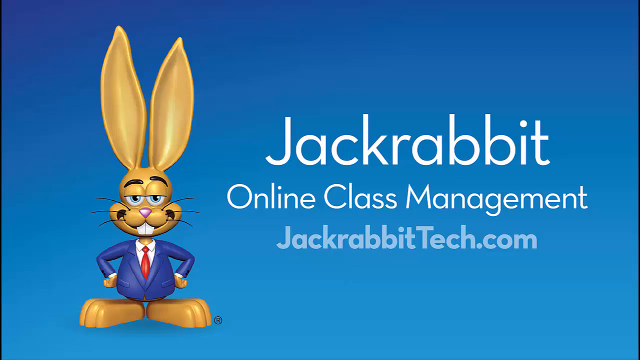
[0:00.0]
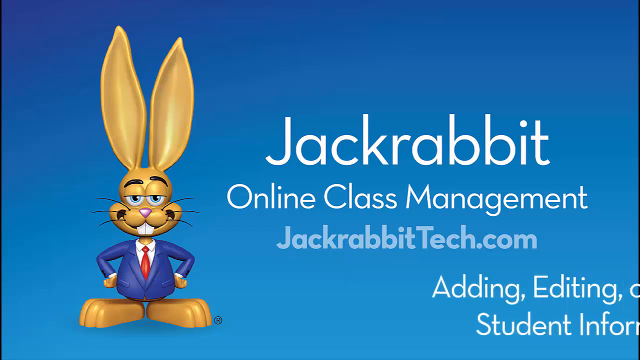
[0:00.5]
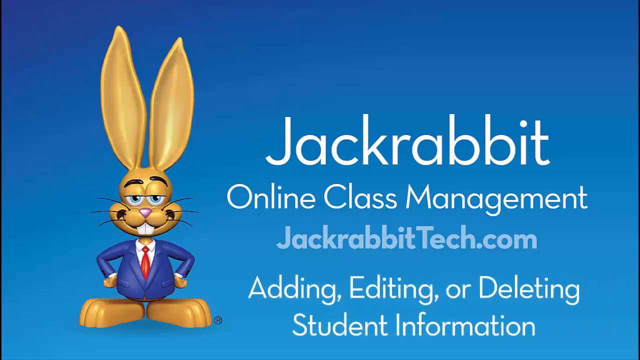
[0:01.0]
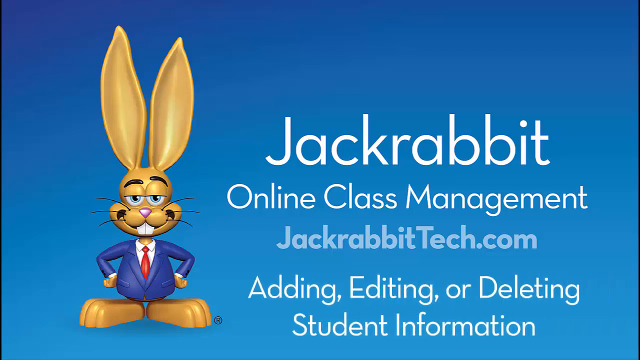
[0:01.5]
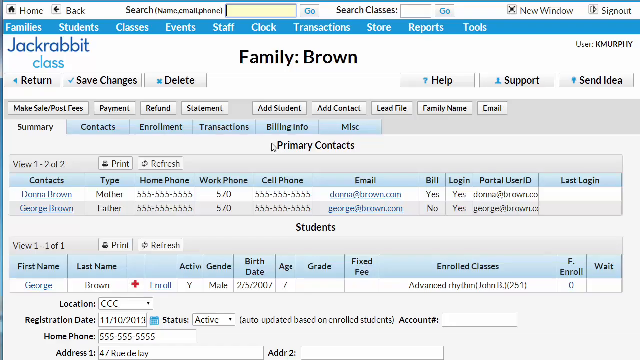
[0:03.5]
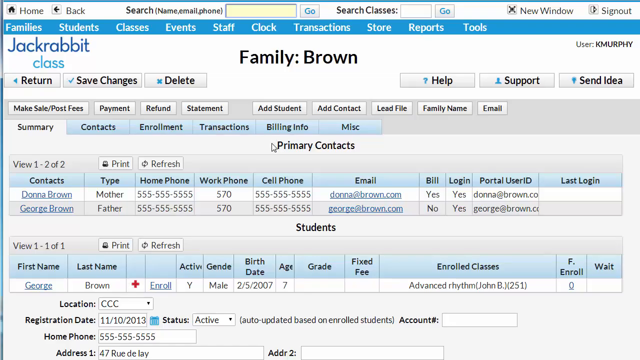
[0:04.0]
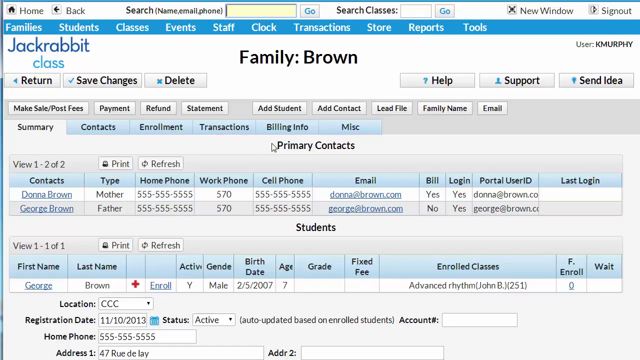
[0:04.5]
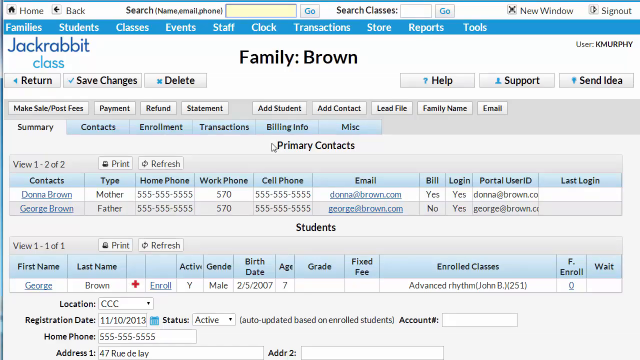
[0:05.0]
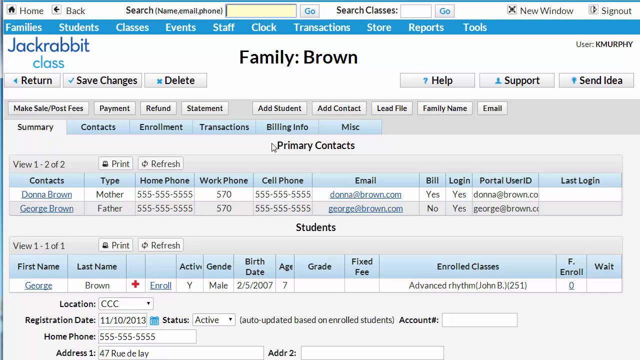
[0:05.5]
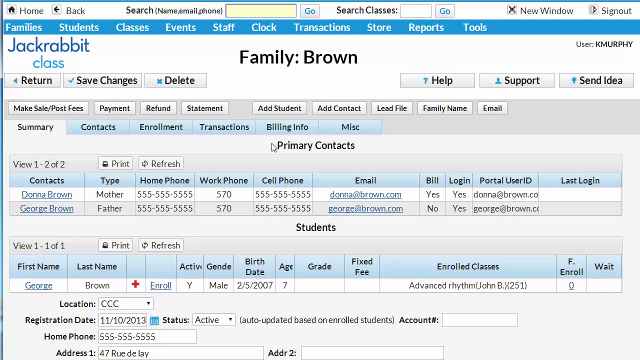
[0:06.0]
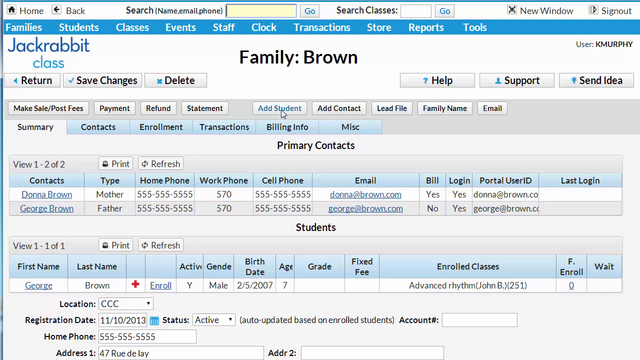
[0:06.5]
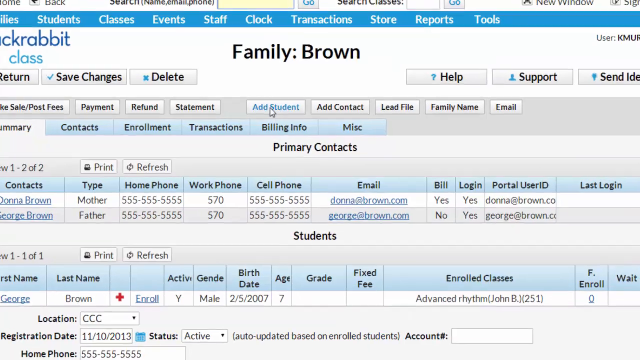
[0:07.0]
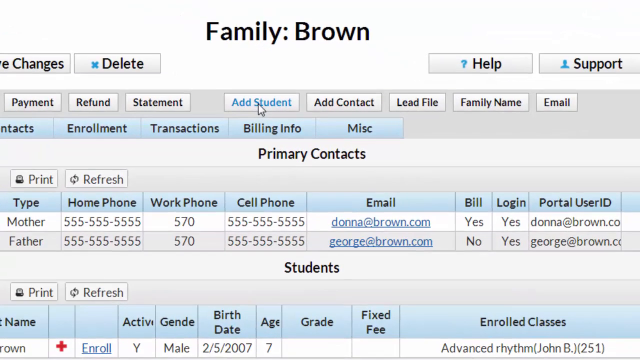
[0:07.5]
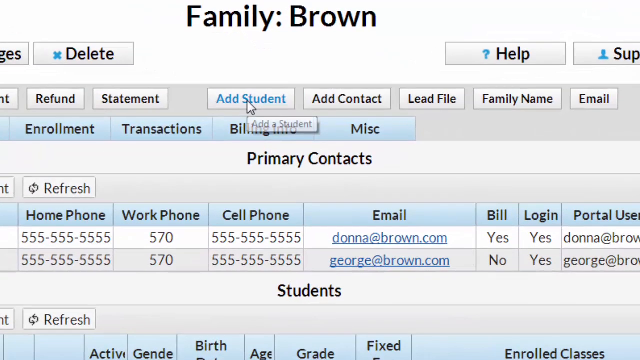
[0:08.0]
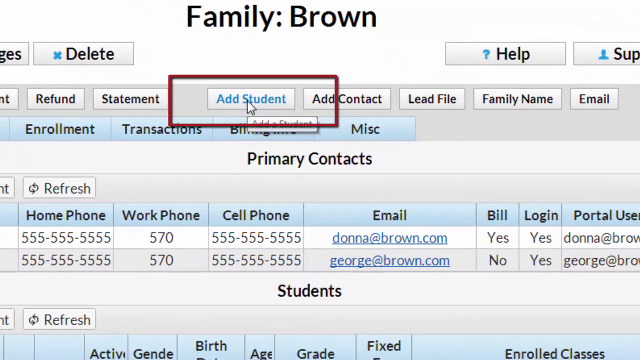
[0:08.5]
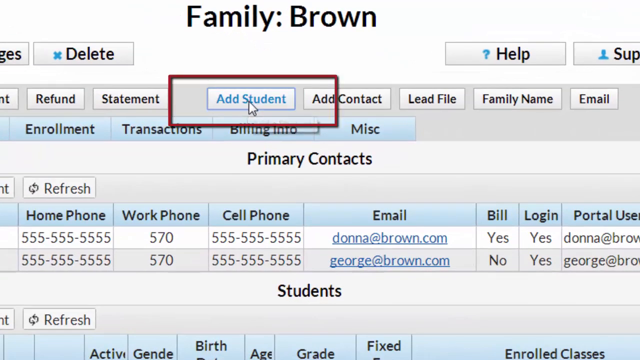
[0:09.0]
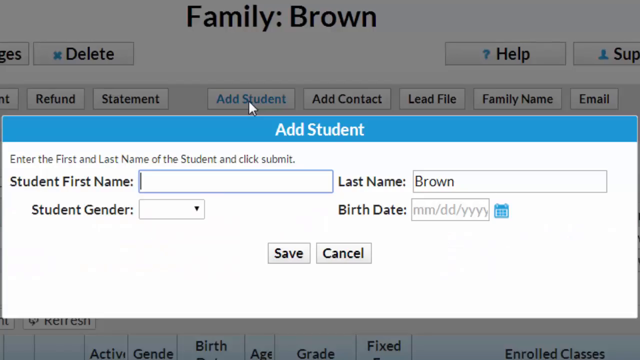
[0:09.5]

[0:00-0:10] An image shows "Jackrabbit Online Class Management" with the "JackrabbitTech.com" URL below it on a blue background. On the left is an image of a rabbit with very long ears pointing straight up, wearing a blue suit jacket, a white shirt and a red tie. Below that, "Adding, Editing, or Deleting Student Information" appears from the right of the screen. A new page follows that seems very busy, with the Jackrabbit class logo at the top left. The page shows the family name Brown and a whole list of contact information and names for the contacts in this family. The icon hovers over the Add Student tab, and a red box appears over it. When it is clicked, a new pop-up appears for adding information for a new student, with fields for the student's first name, last name, gender and birth date.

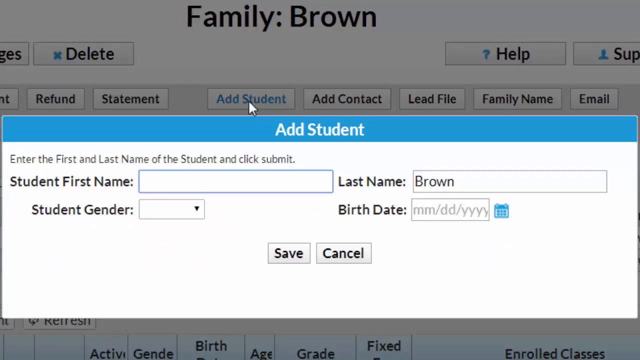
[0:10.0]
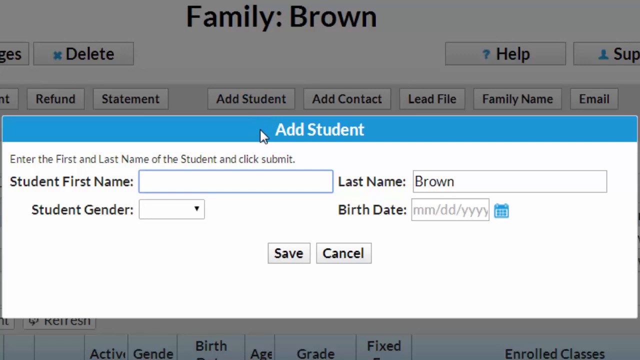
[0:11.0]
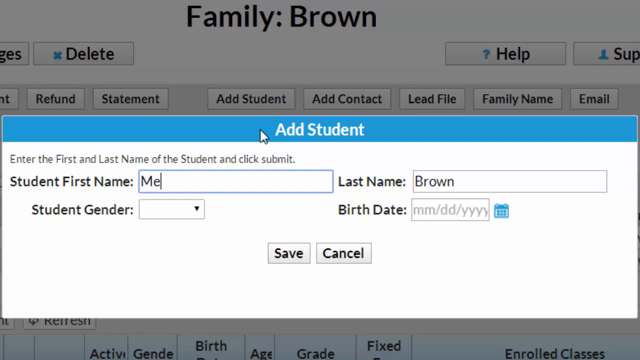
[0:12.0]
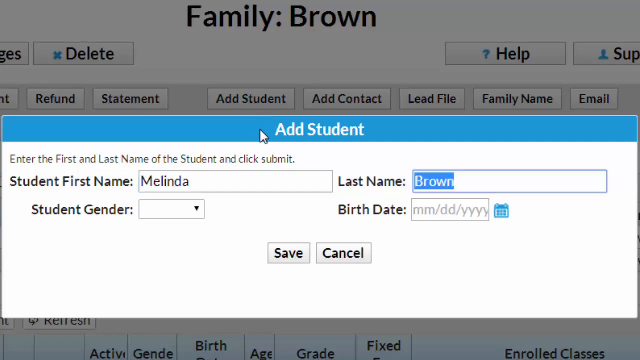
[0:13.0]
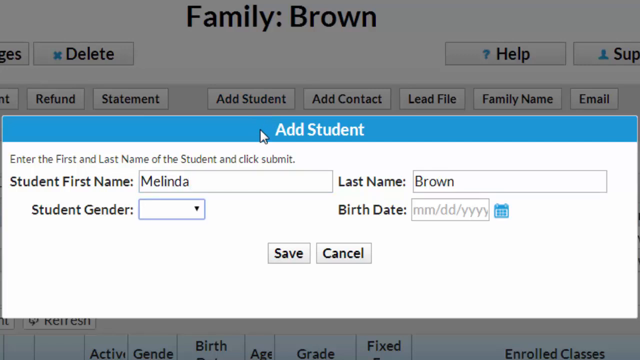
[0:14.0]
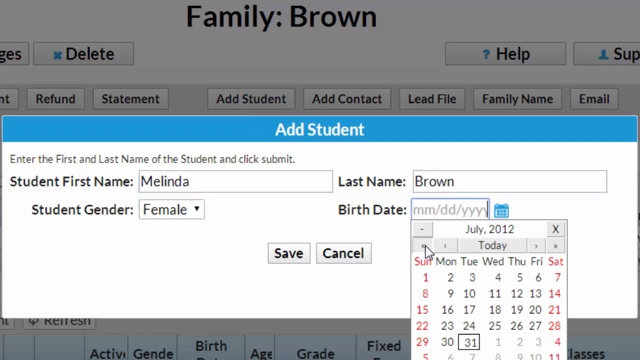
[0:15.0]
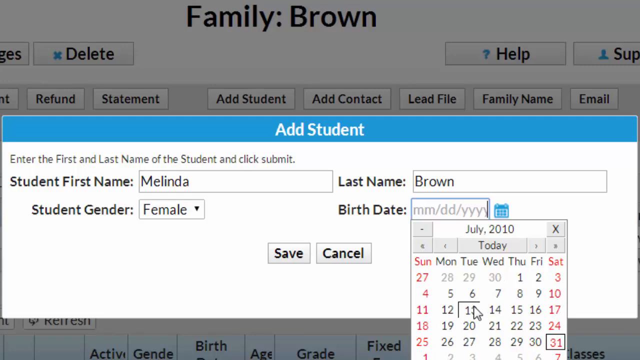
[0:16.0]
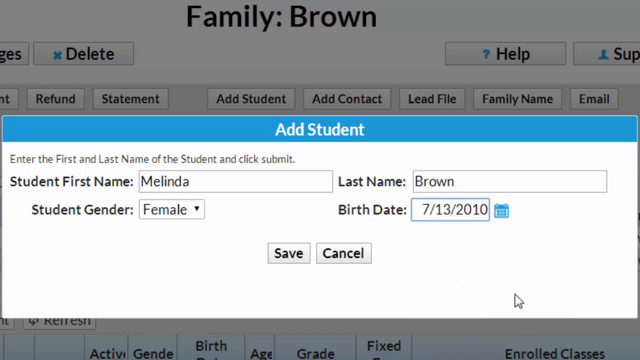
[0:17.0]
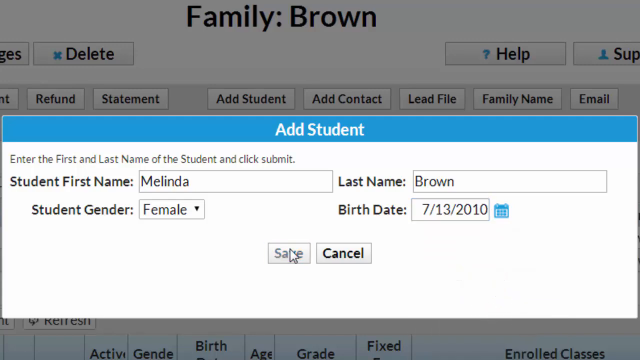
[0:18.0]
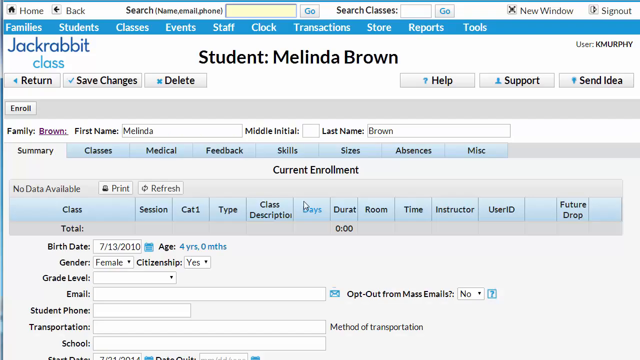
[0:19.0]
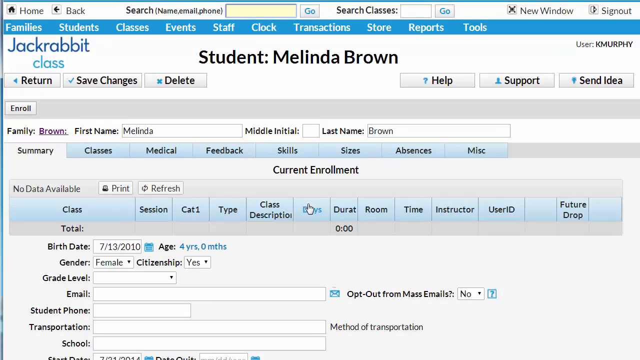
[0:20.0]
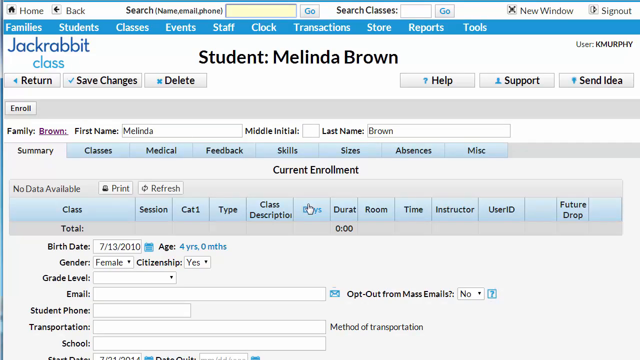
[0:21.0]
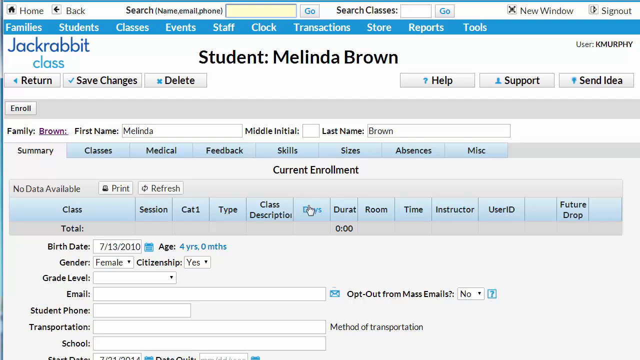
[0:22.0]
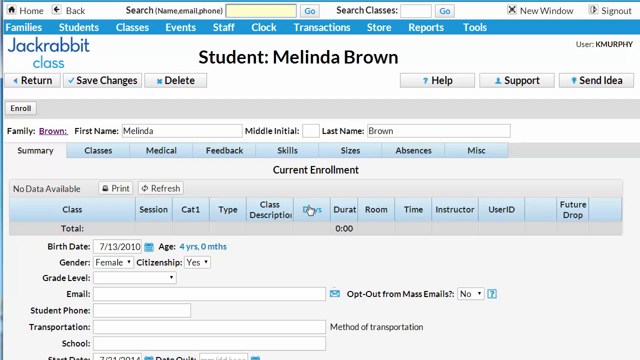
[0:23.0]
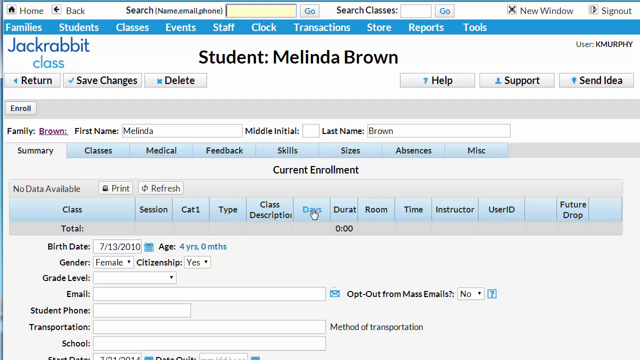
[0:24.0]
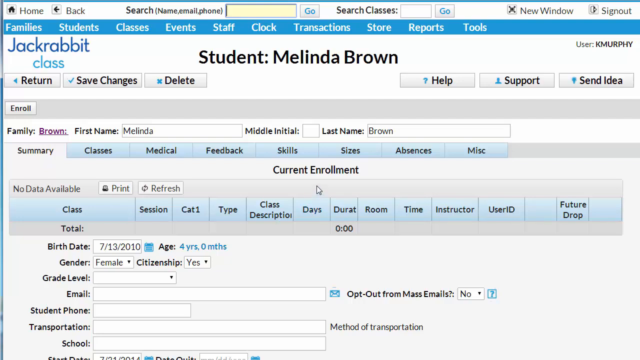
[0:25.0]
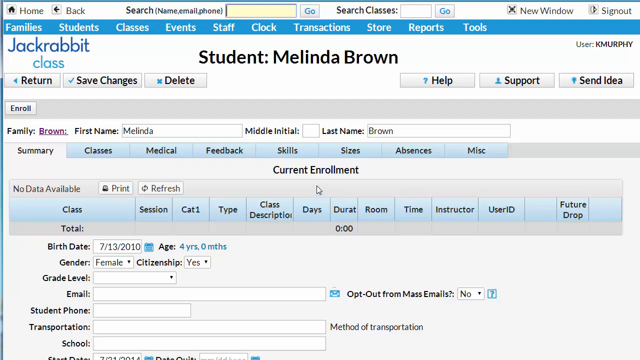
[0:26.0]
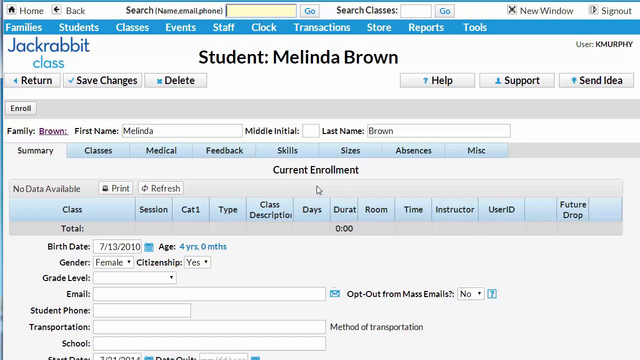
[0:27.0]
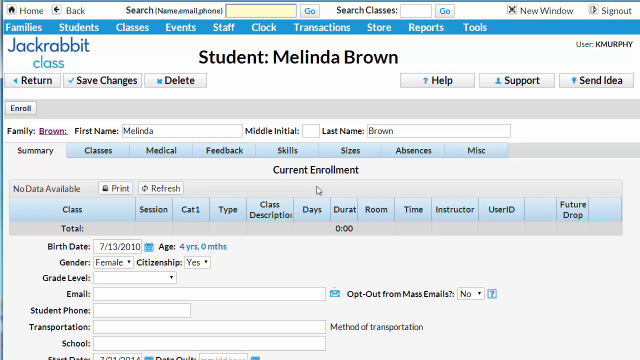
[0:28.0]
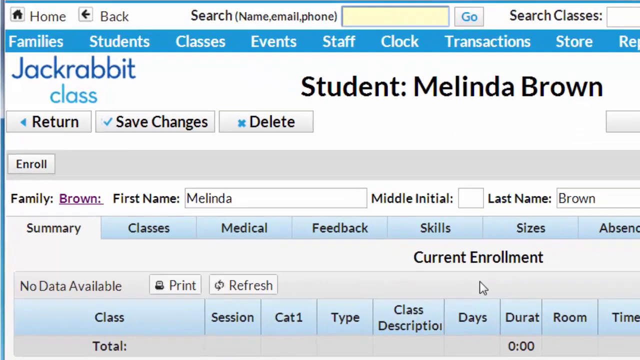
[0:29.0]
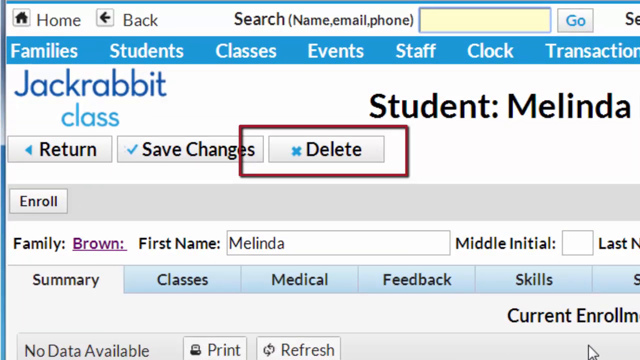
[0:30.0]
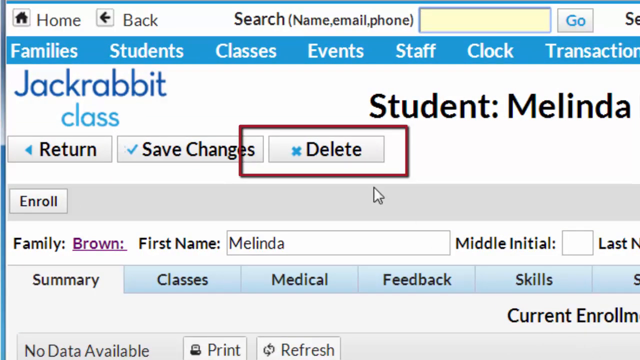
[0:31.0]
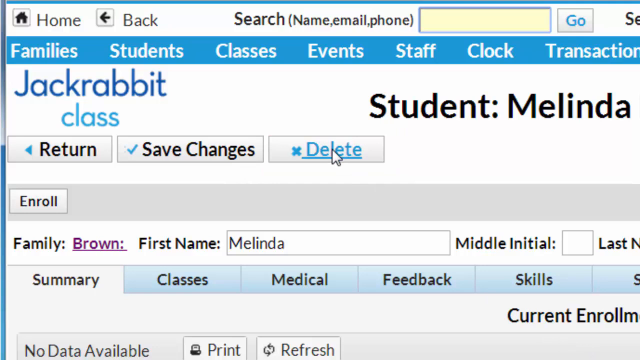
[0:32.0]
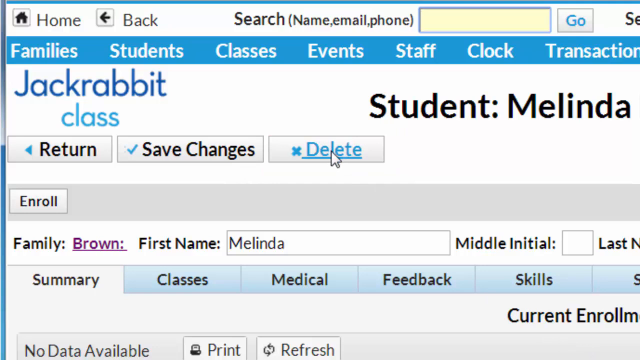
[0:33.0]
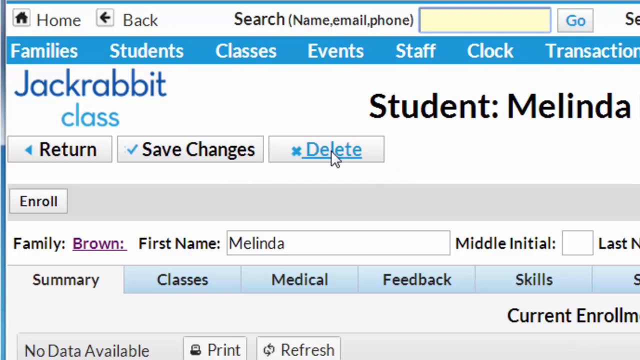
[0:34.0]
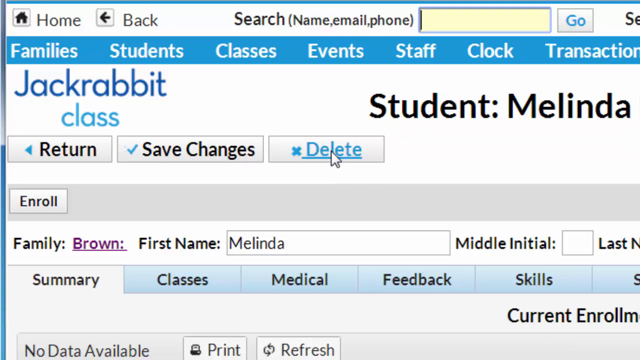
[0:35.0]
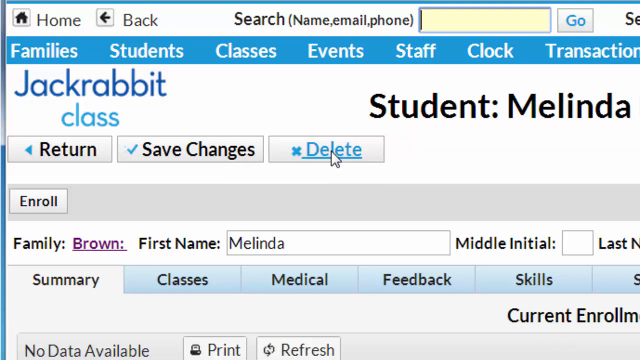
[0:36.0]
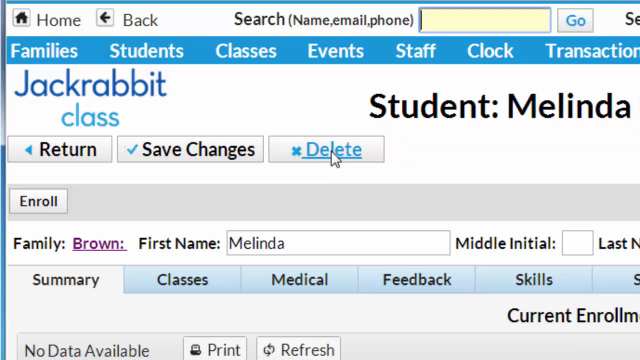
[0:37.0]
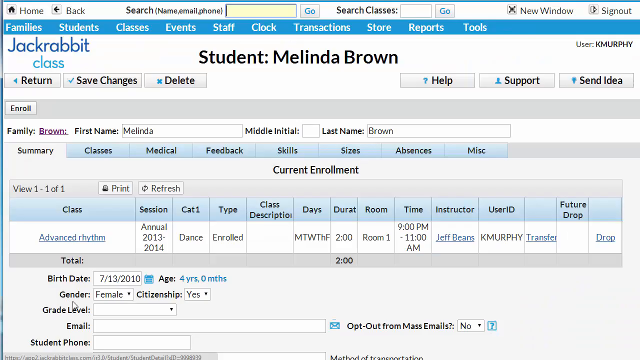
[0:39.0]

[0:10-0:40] The mouse briefly hovers over the Add Student title. The student's first name, Melinda, is typed in, the last name is Brown, and the gender is selected as Female. The birth date drop-down menu pops up and the cursor clicks on the date July 13th, 2010. The mouse clicks the save button, then hovers over several parts of the page, remaining mostly over the "Days" tab, and moves slightly above it. The view zooms in to a Delete tab button near the top as a red rectangular box appears around it, highlighting the button. The cursor moves to hover over this button and stays there for several seconds. The view zooms back out to the full page and then begins to zoom in on another section at the bottom of the screen.